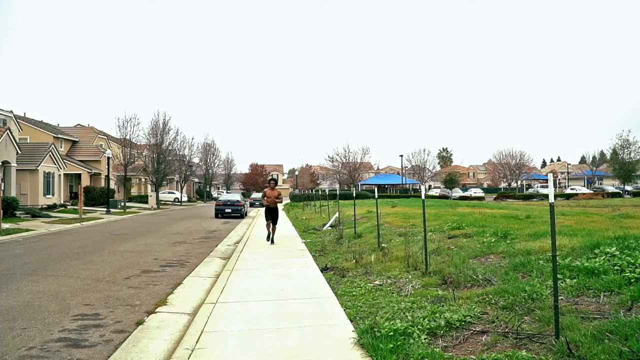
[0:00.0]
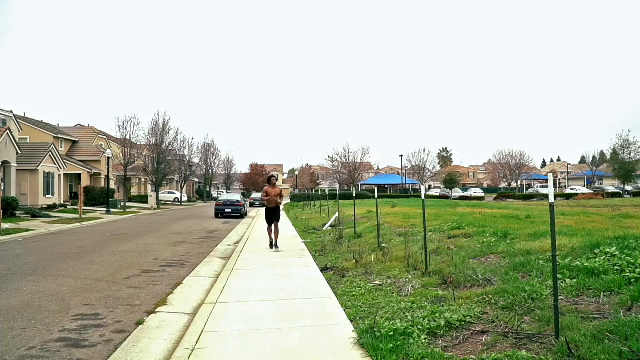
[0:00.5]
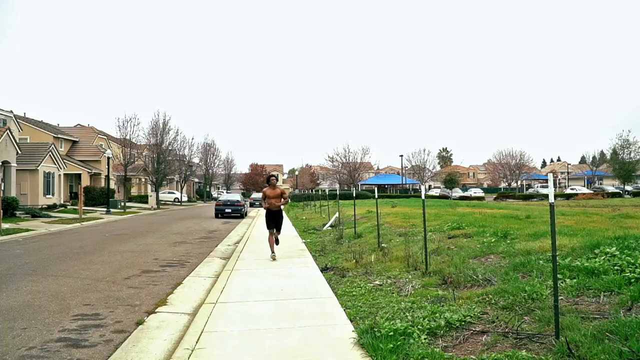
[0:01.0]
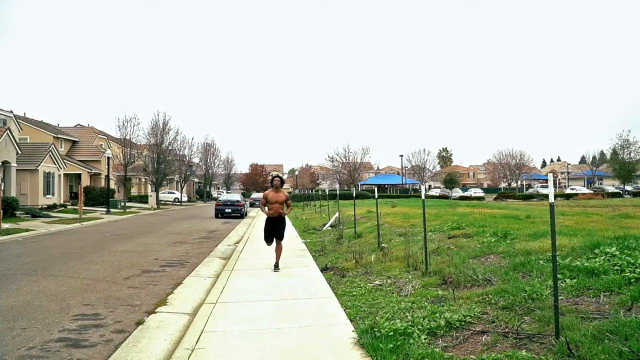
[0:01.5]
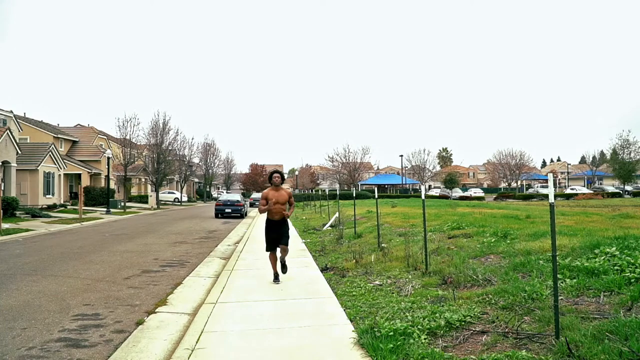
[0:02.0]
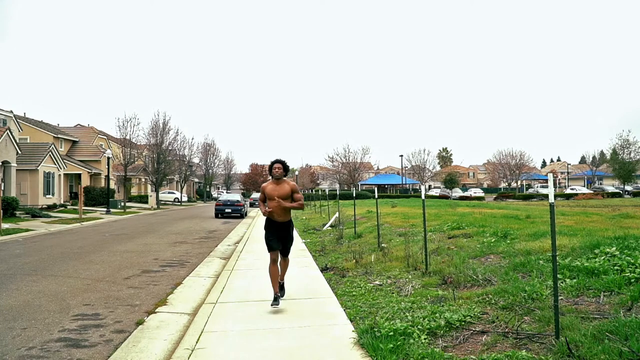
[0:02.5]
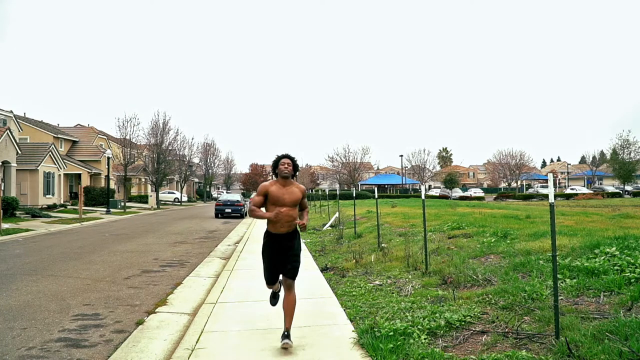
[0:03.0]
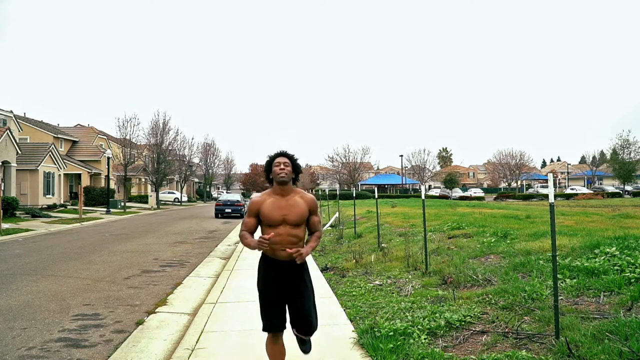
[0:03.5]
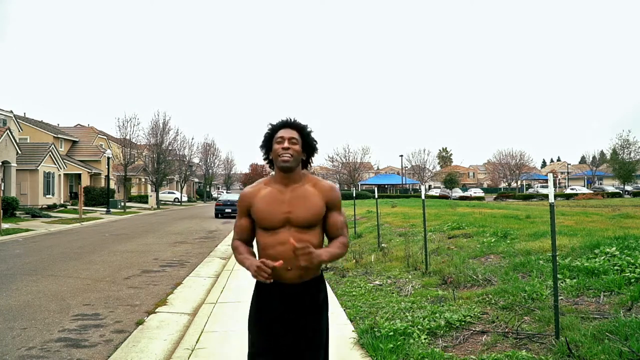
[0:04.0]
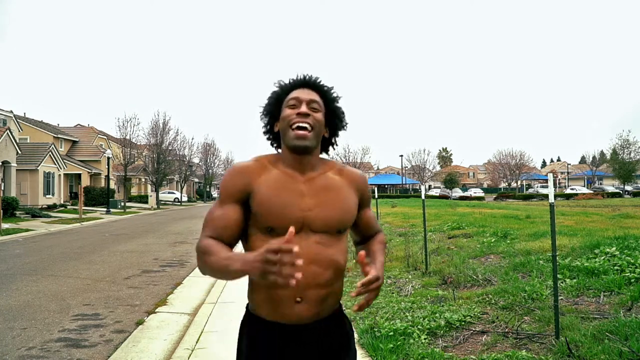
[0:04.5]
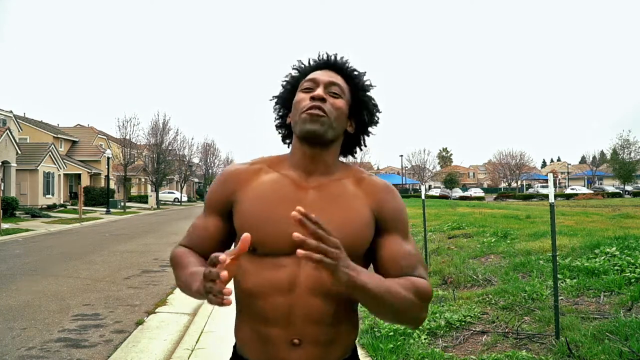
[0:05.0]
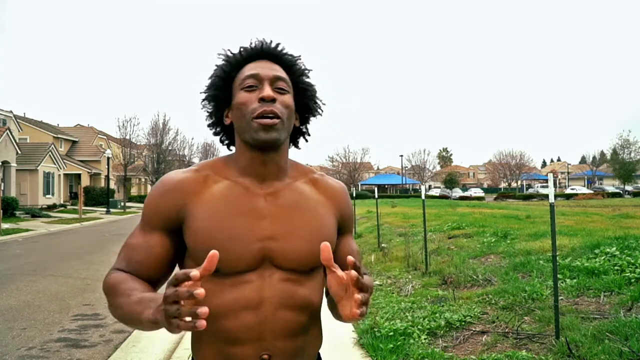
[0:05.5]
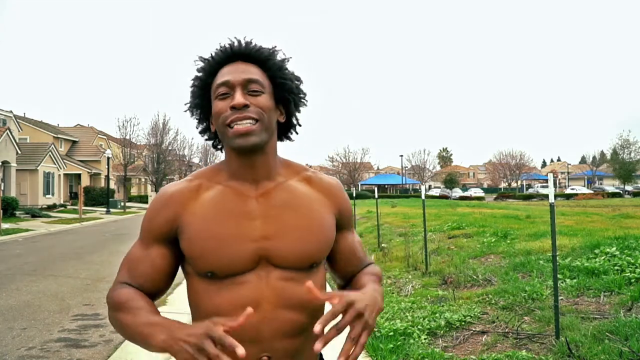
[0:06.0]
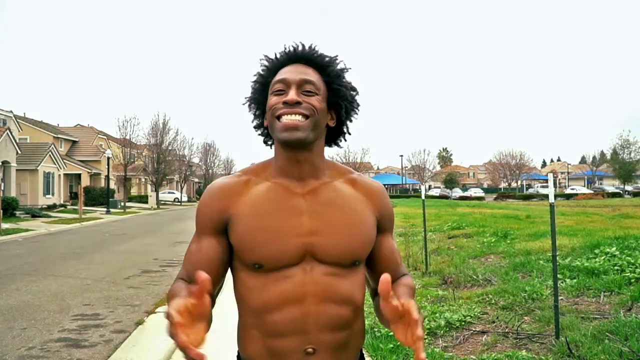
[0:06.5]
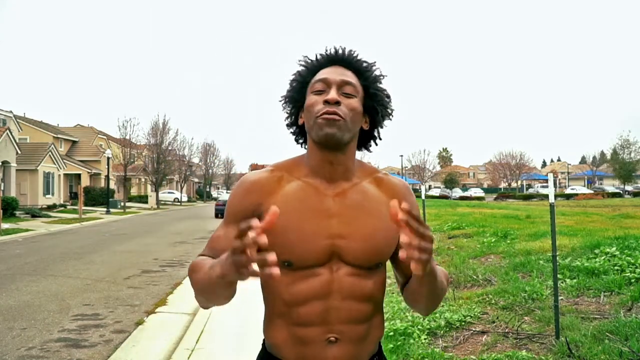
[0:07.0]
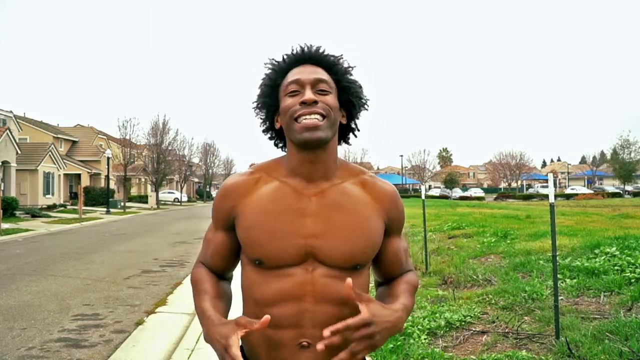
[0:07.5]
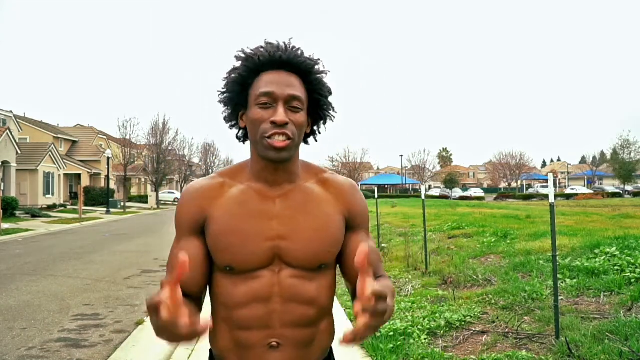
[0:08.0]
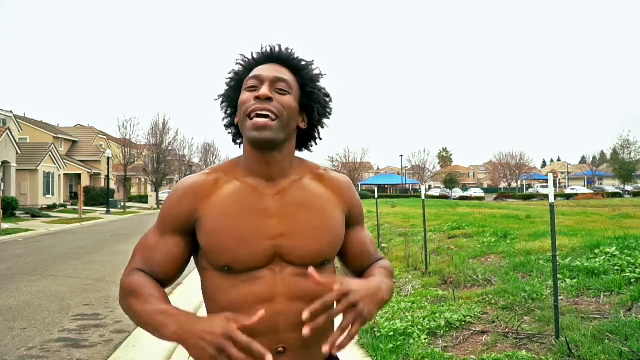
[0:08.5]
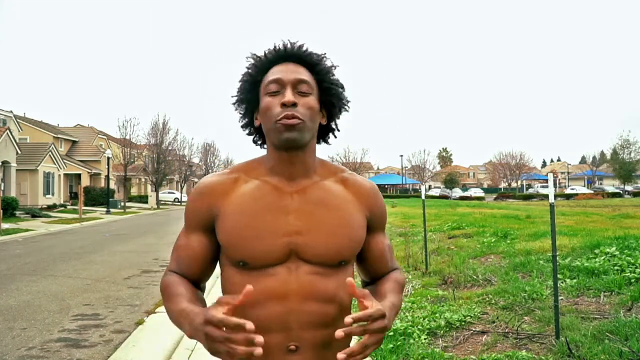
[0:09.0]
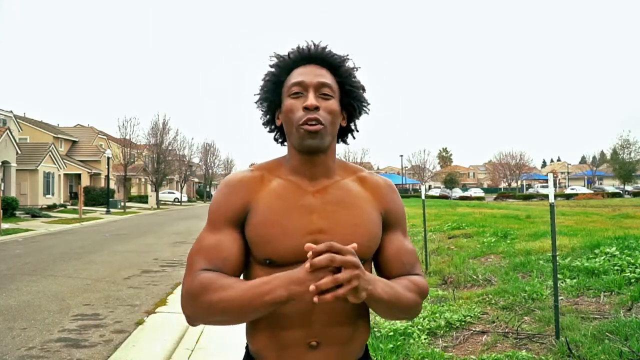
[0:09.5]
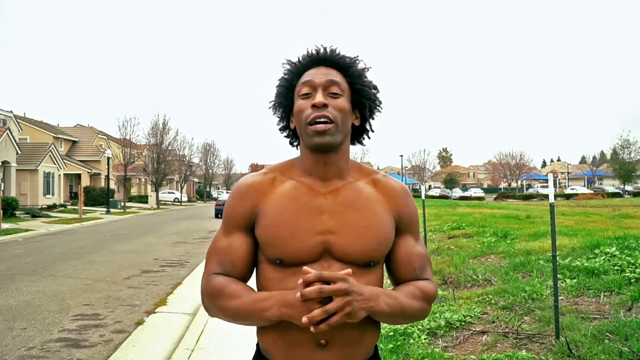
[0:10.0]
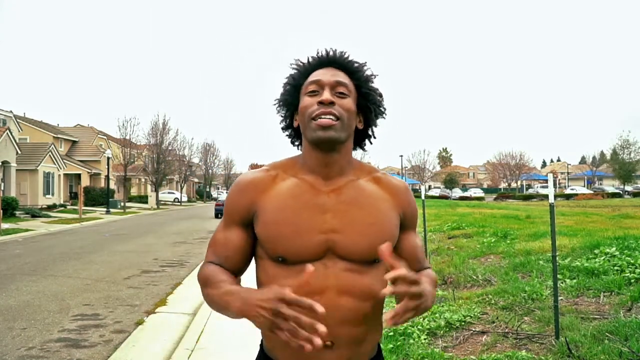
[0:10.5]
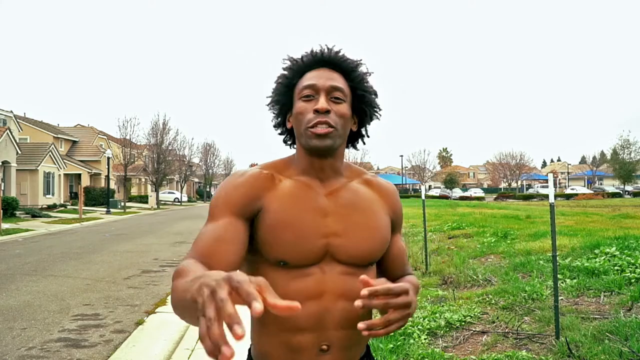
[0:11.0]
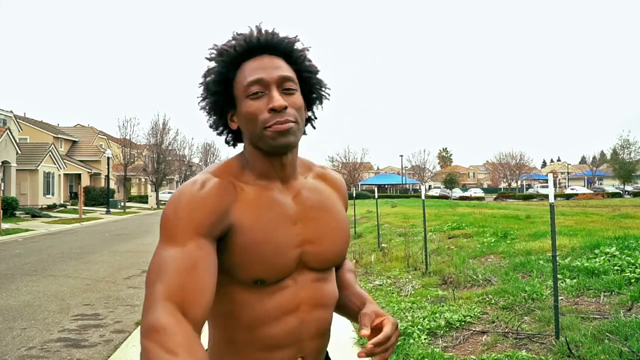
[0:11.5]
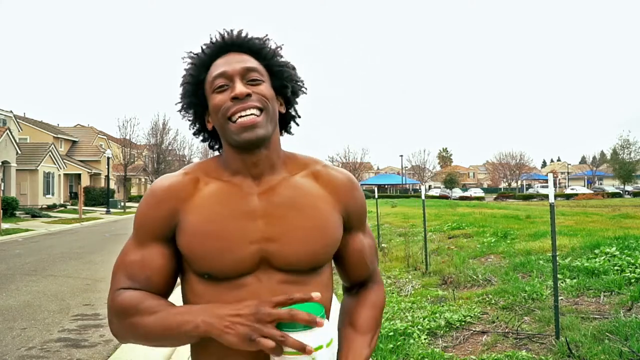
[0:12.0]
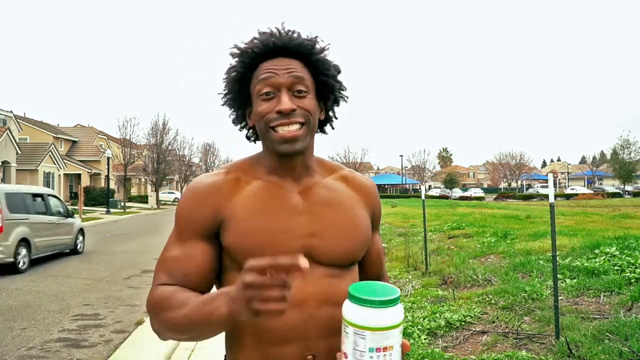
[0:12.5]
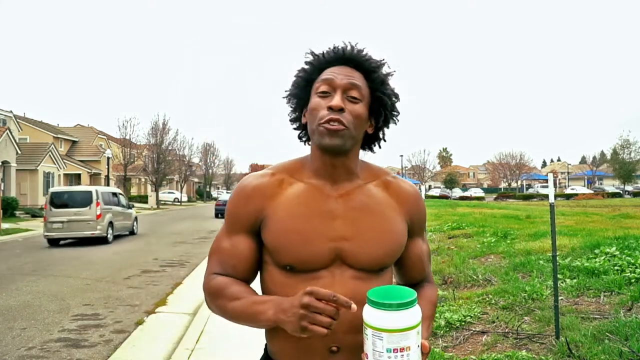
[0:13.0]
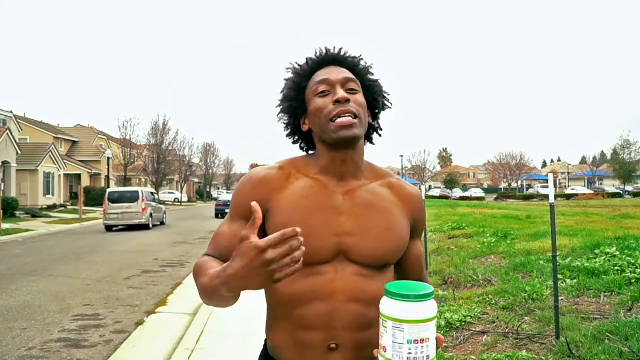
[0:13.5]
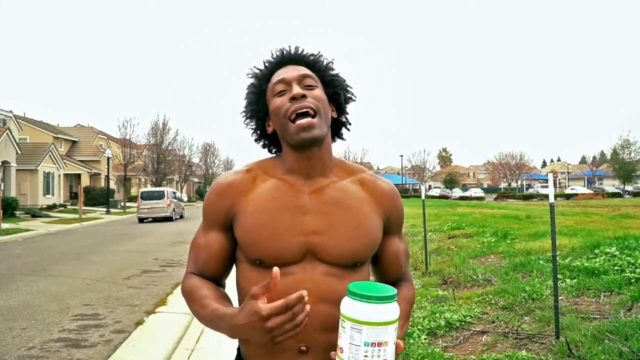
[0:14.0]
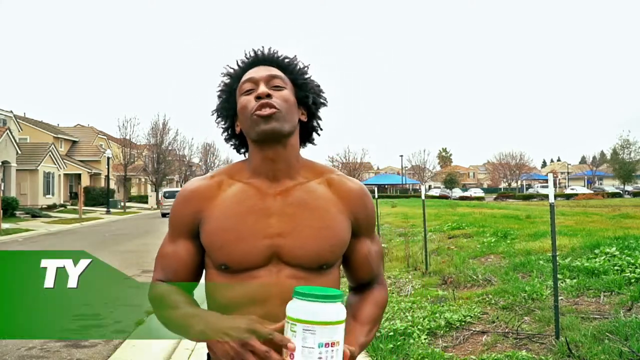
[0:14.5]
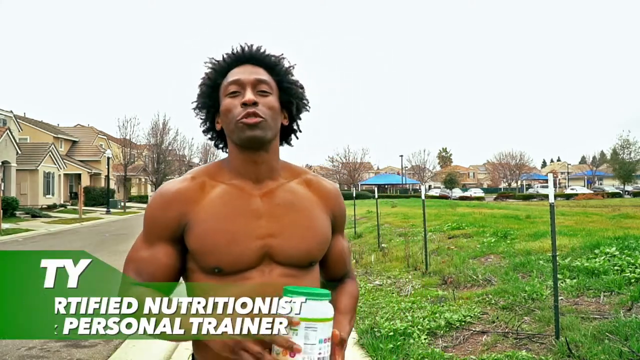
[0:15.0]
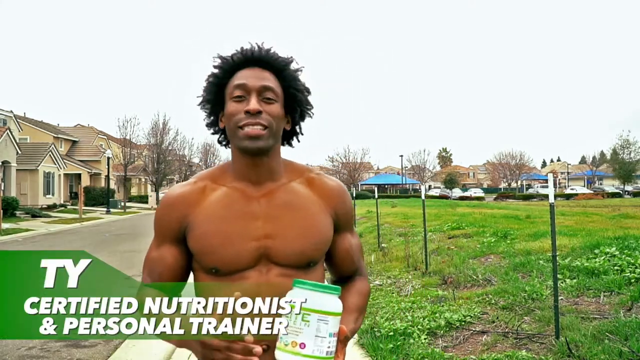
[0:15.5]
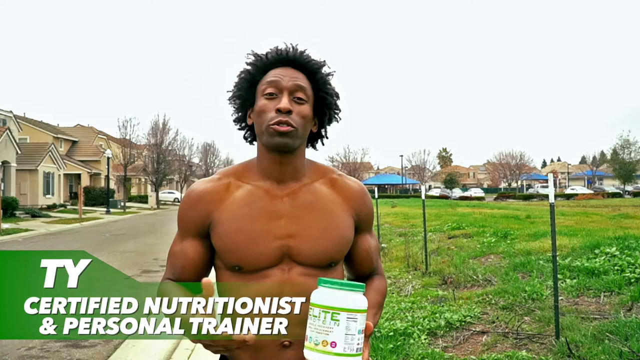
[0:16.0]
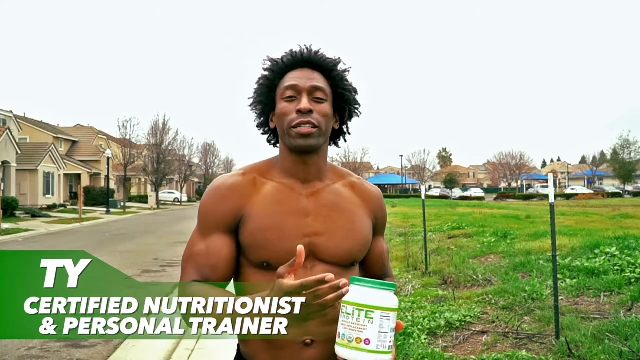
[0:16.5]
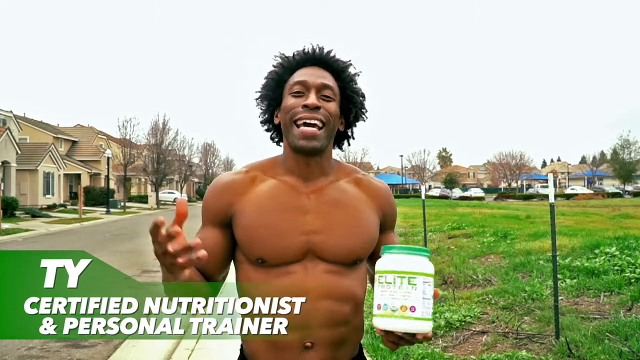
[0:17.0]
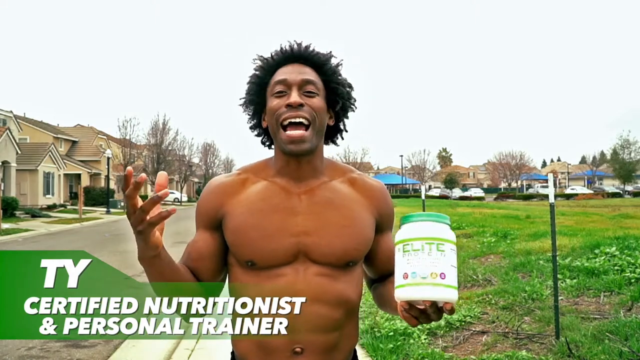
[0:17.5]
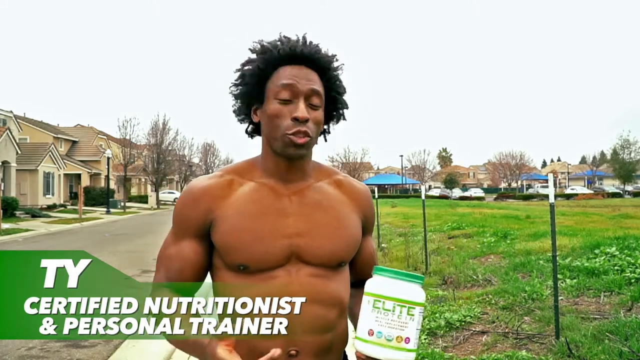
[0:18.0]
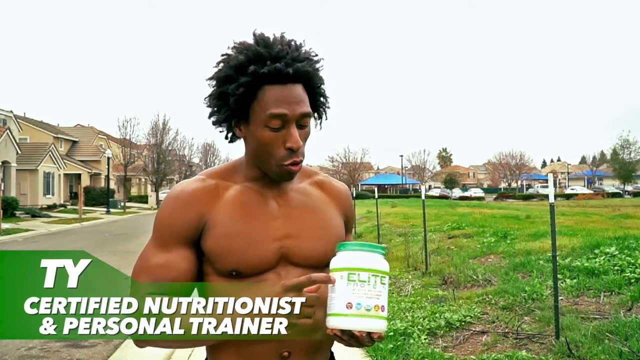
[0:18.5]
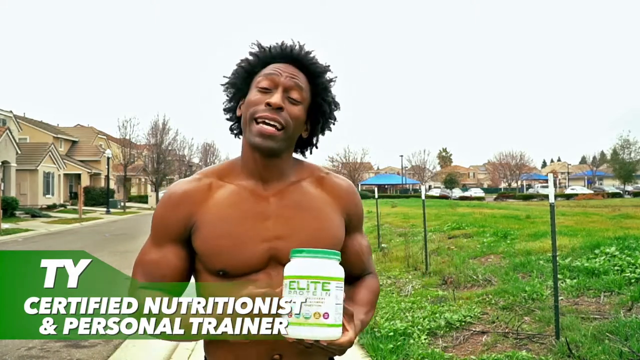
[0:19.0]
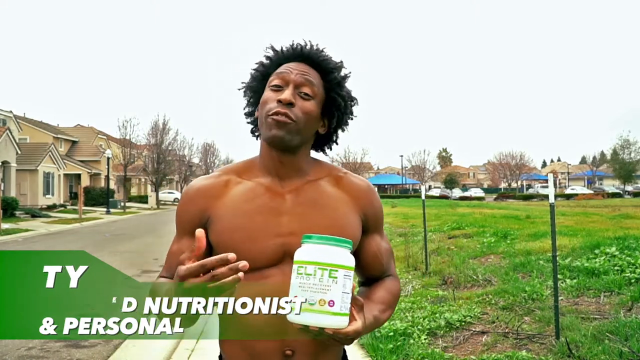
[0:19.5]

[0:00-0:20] A person appears to be jogging through a neighborhood. He is a Black man, probably in his late 20s to early 30s, with short hair. He has no shirt on and wears black shorts about knee length, and he appears to have black sneakers on. He jogs toward the camera with a big smile and a sort of excited expression. There is a row of houses on his left side and sort of an empty field with fence posts on his right side. He gestures excitedly with his hands and seems to have a lot to say about whatever he is gesturing about. He briefly reaches up with his right hand and grabs a white jar with a green top as a car passes by him on the left. He points toward the jar with his fingers.